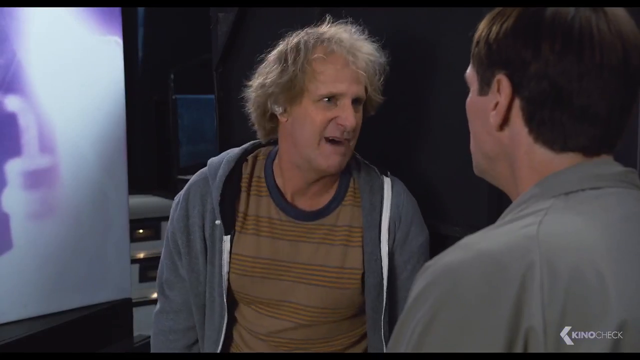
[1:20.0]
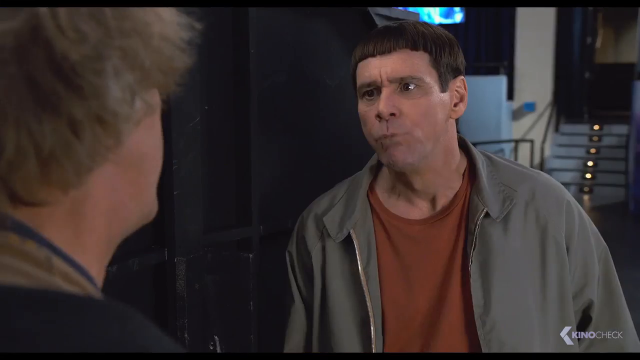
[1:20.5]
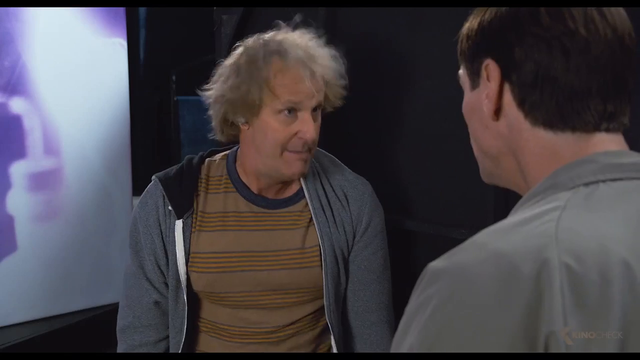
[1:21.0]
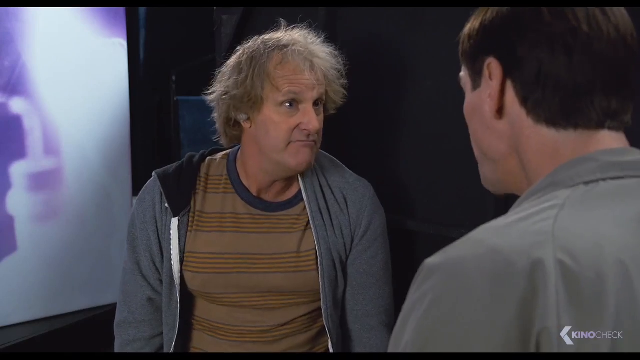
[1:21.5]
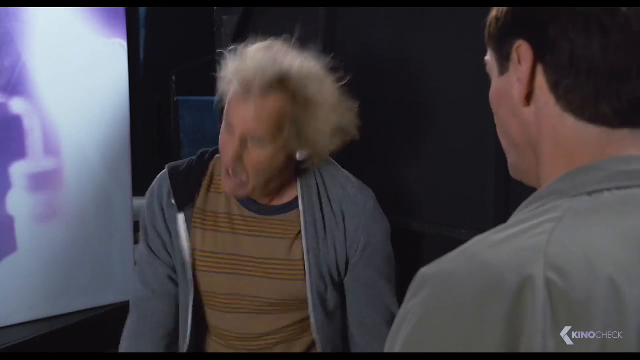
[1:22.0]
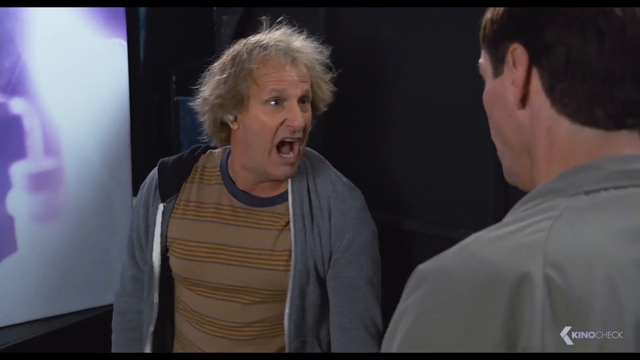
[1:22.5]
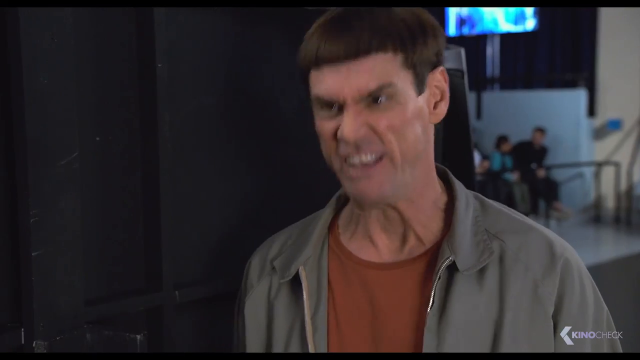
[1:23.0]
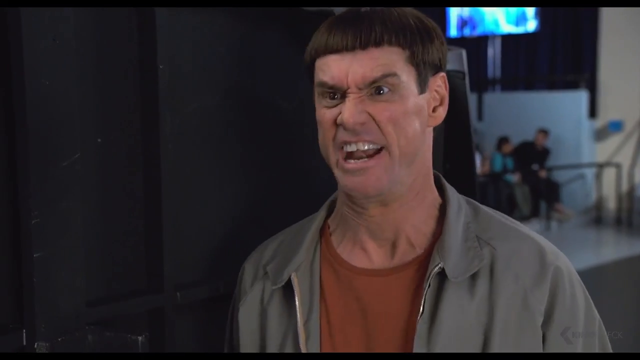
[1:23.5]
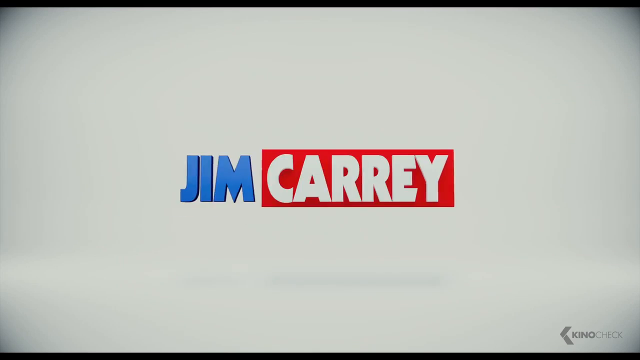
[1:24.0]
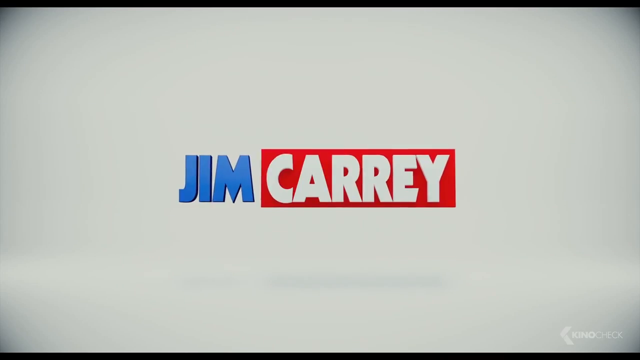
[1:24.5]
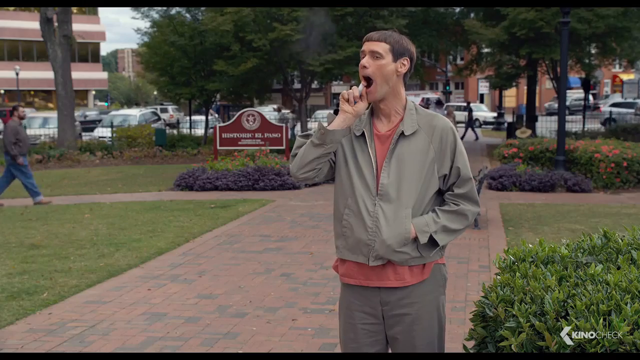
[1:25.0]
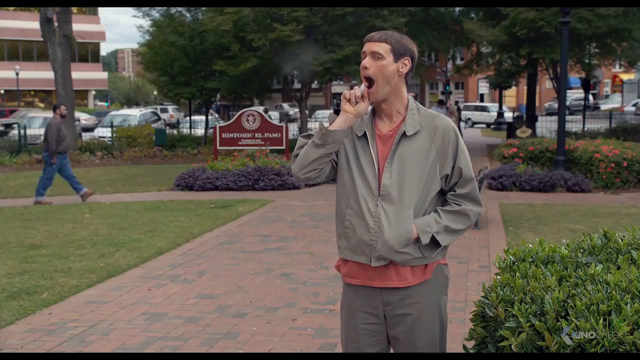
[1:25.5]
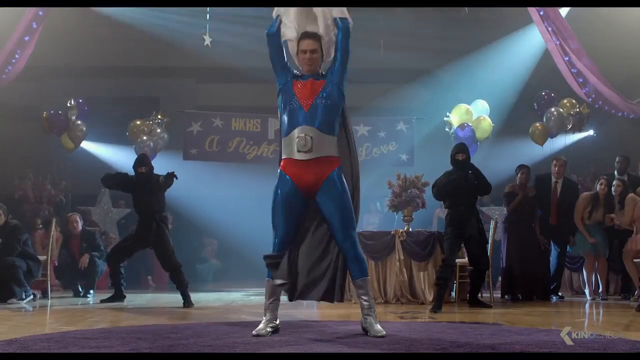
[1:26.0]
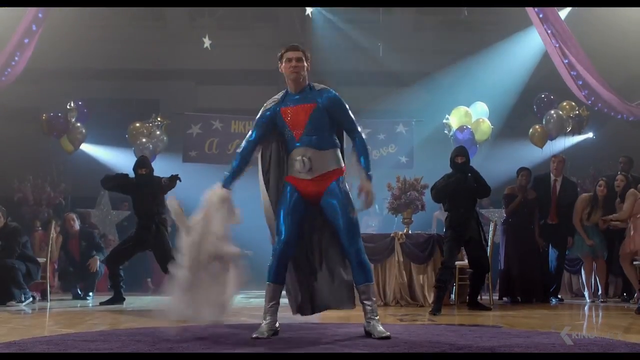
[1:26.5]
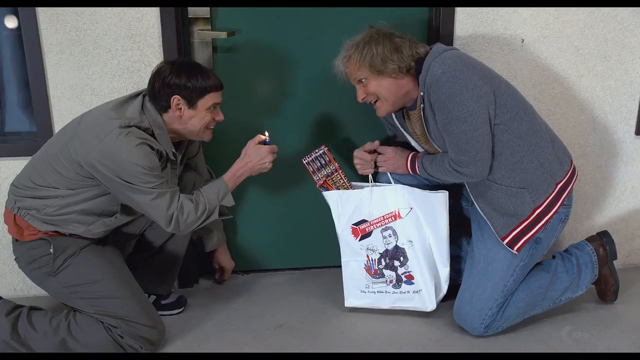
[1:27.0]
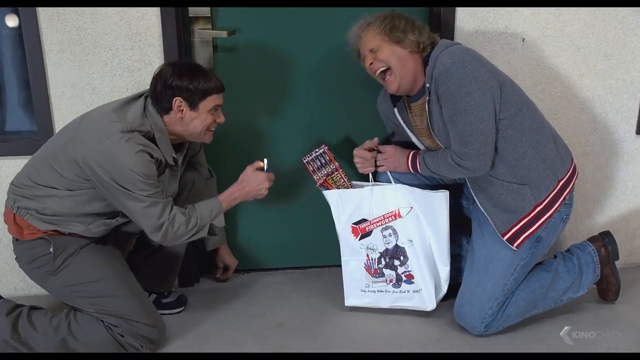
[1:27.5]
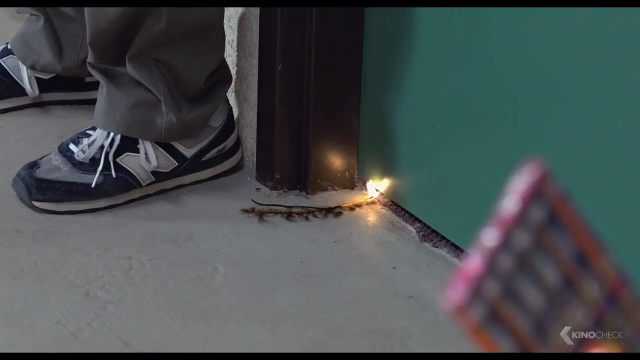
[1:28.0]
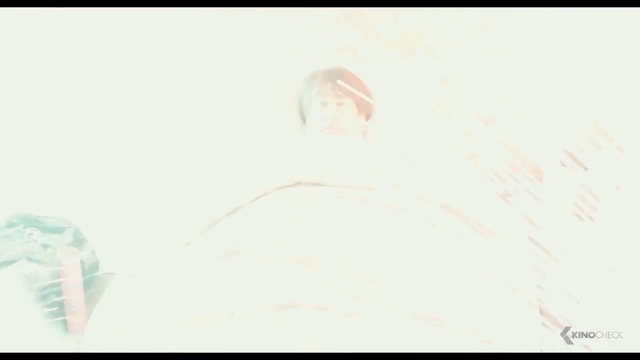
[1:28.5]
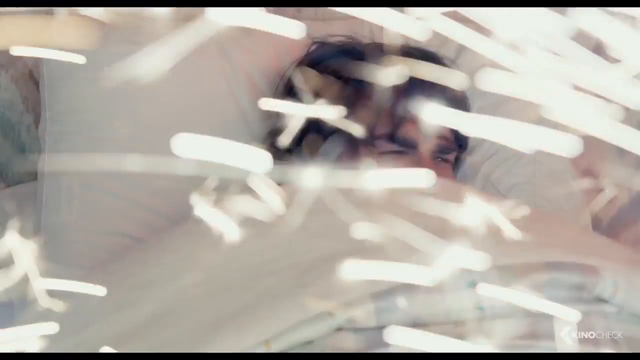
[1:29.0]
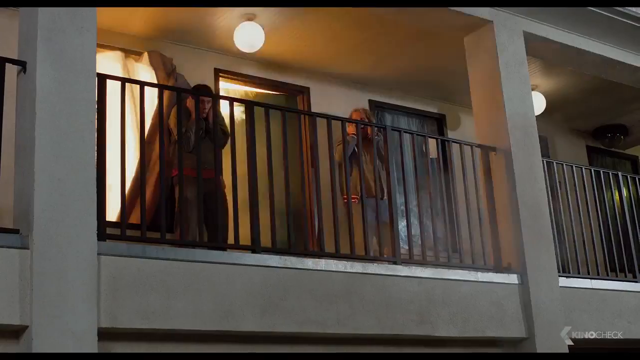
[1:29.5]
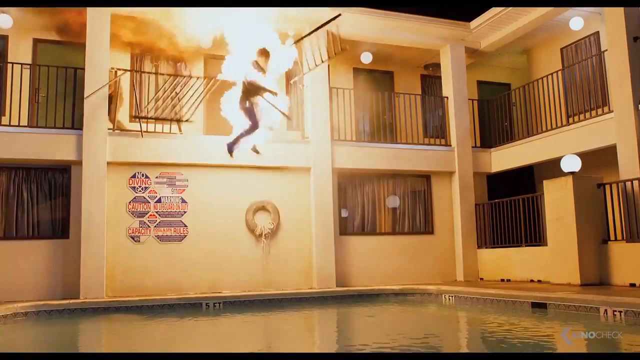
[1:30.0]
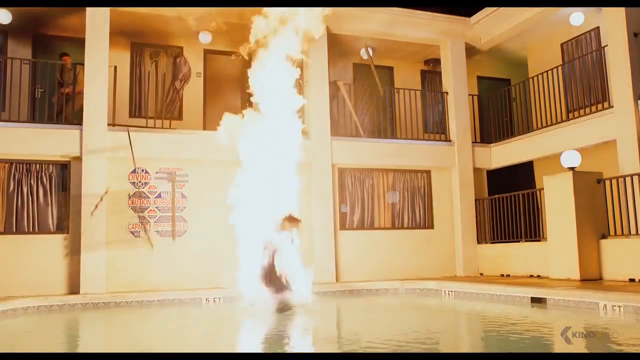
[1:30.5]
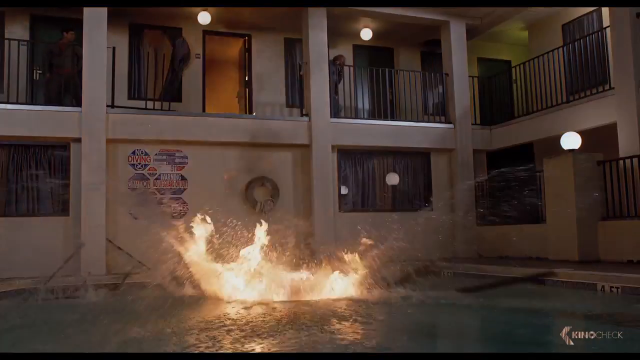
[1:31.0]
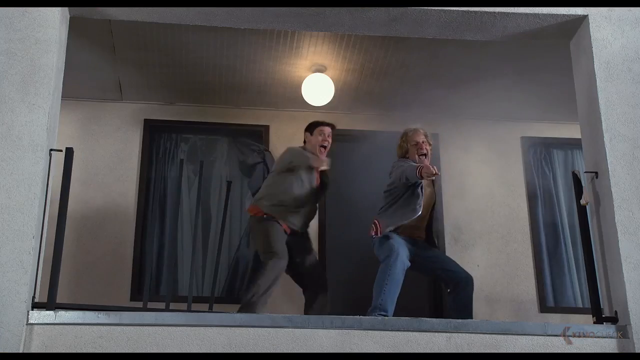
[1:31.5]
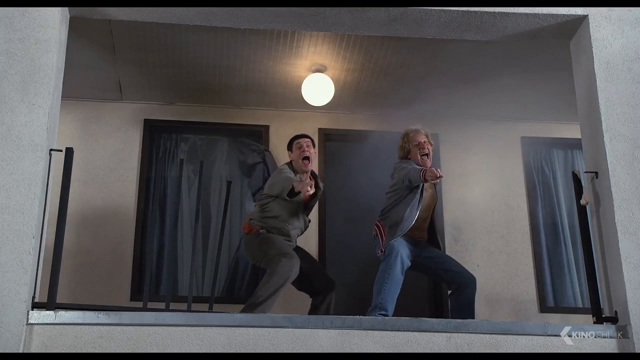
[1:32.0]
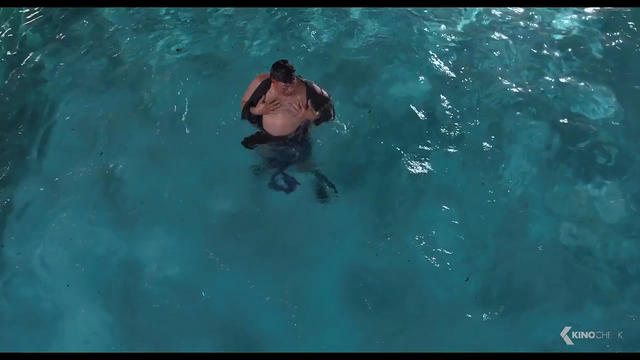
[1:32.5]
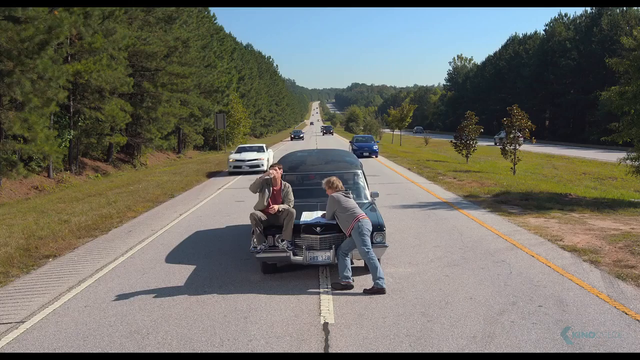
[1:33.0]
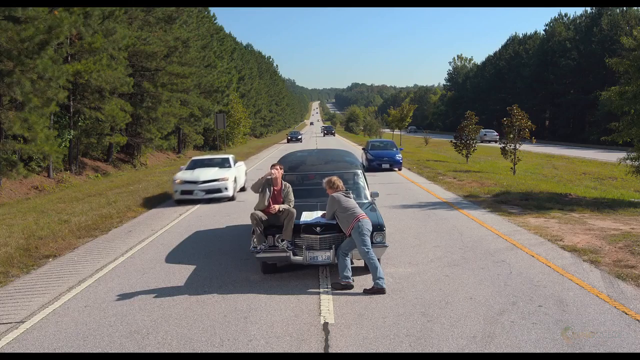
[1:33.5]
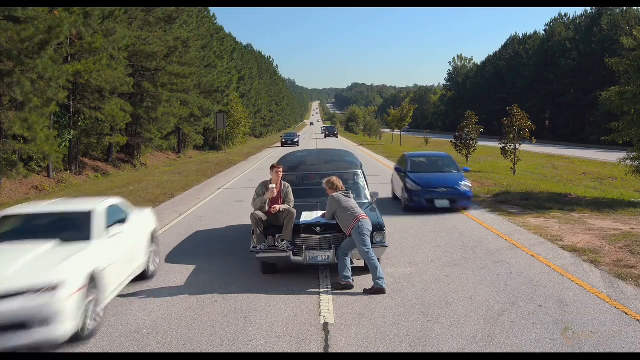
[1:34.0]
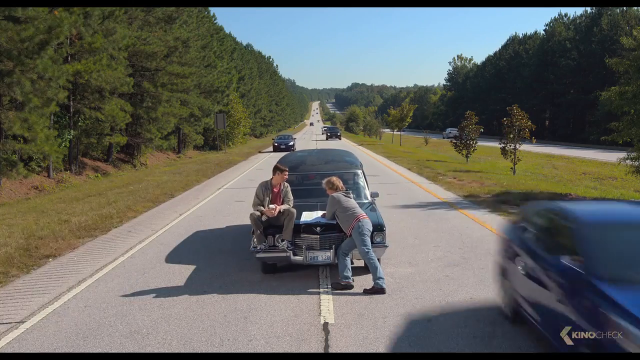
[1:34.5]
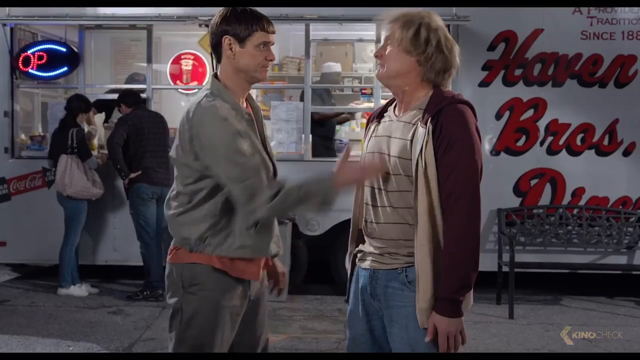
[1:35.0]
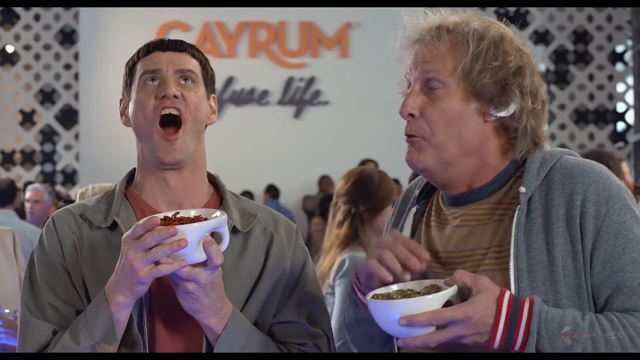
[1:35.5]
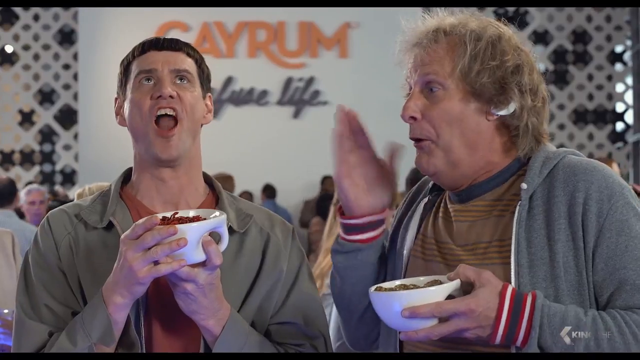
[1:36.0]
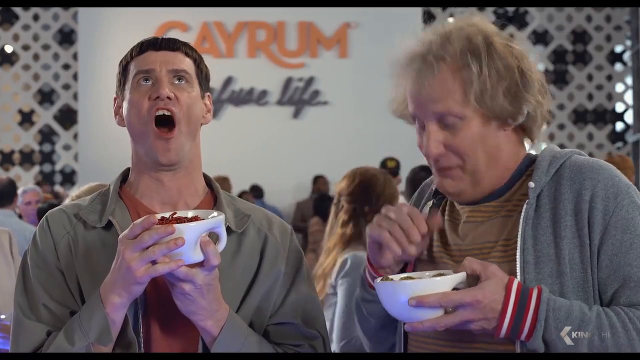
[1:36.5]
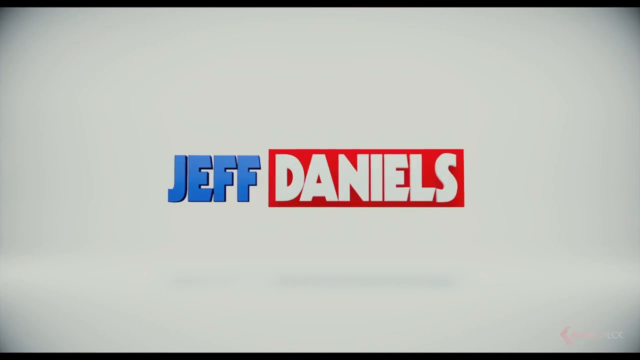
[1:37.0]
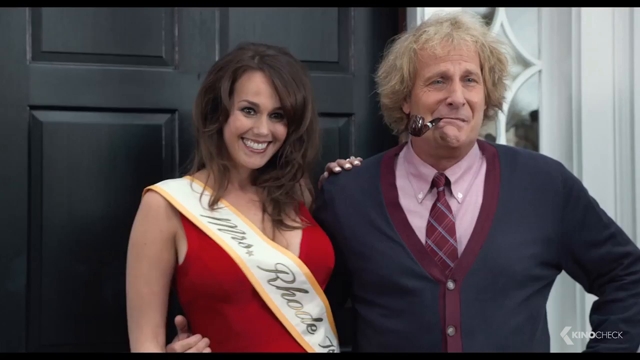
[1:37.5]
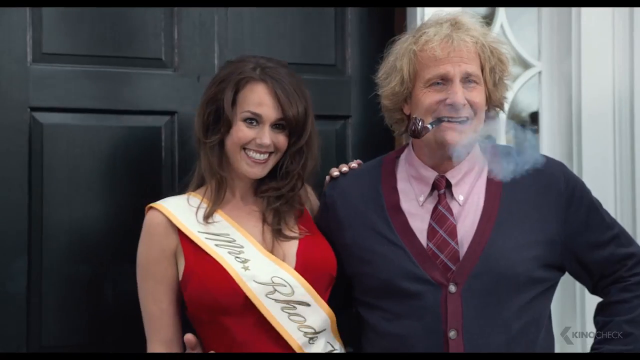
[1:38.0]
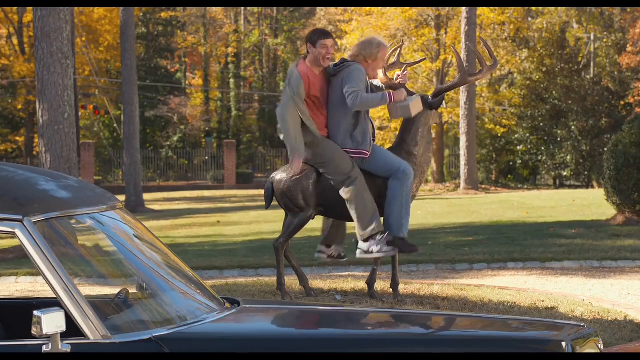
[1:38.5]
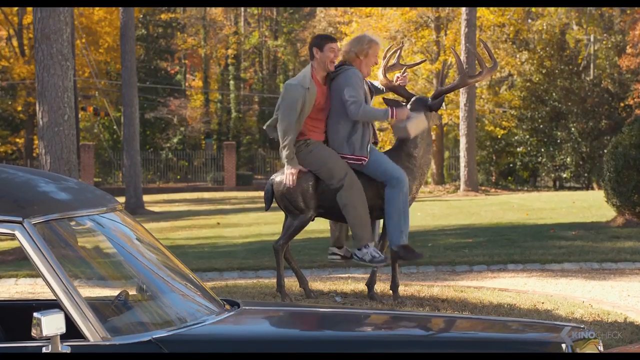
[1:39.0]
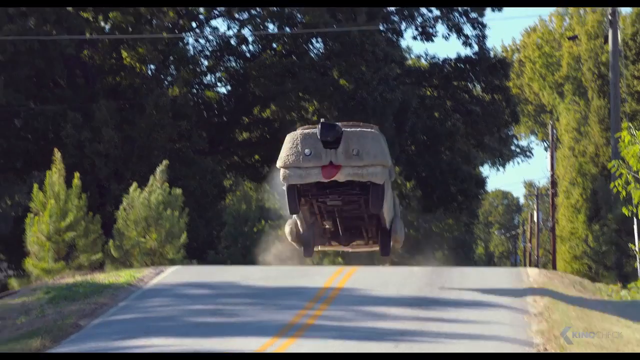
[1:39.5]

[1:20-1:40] The wheelchair man reads from the piece of paper. In the next scene, somewhere else, the older man very expressively shouts something and the two shout back and forth. A screen then says "Jim Carrey" on a white background, with "Jim" in blue and the other word in white text on a red background. The wheelchair character appears back on the college campus, puffing on some sort of breathalyzer thing. Next he is on stage in a homemade Superman outfit surrounded by ninjas. Then fireworks are set off under someone's door; the person whose apartment it is lies in bed with fireworks going off all around, until the apartment explodes and the man is thrown into a pool. Next comes some sort of event where people are eating food.